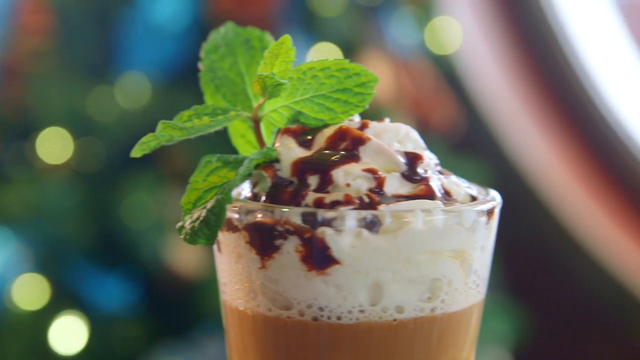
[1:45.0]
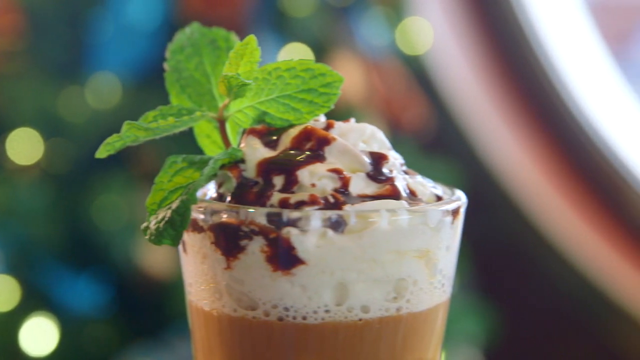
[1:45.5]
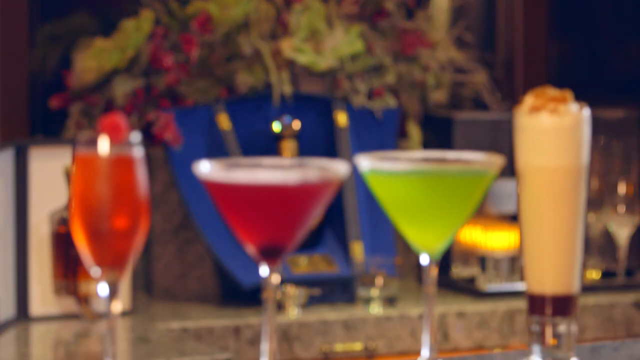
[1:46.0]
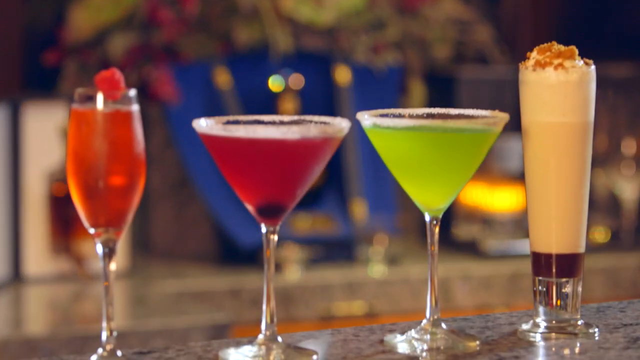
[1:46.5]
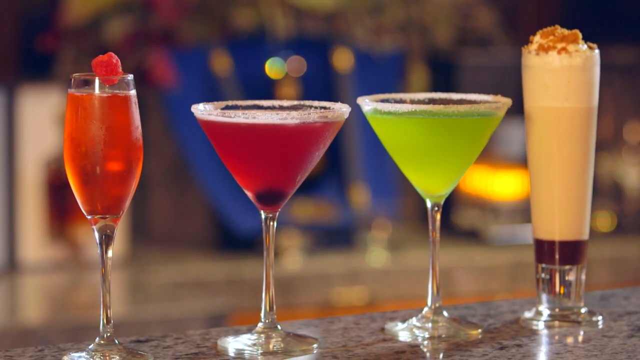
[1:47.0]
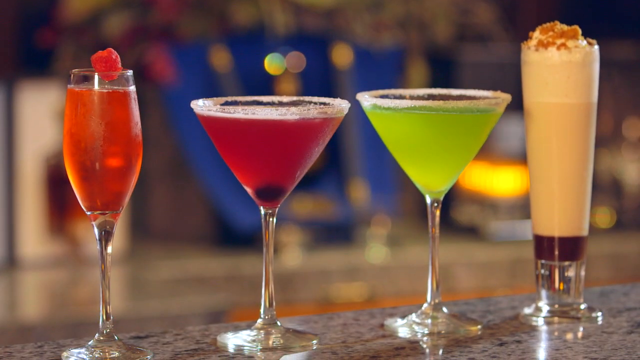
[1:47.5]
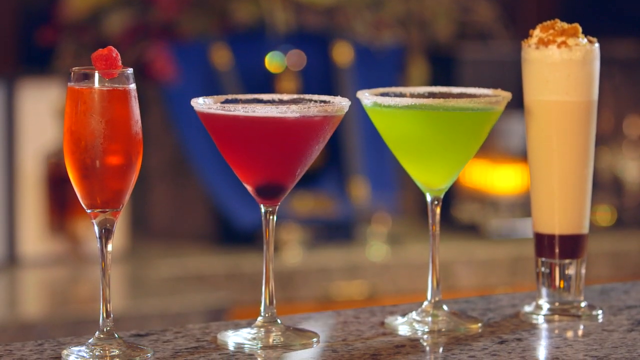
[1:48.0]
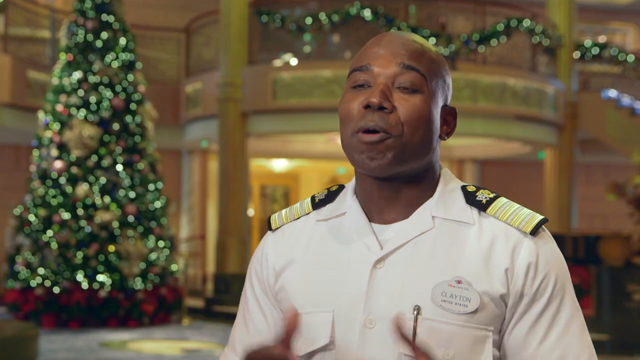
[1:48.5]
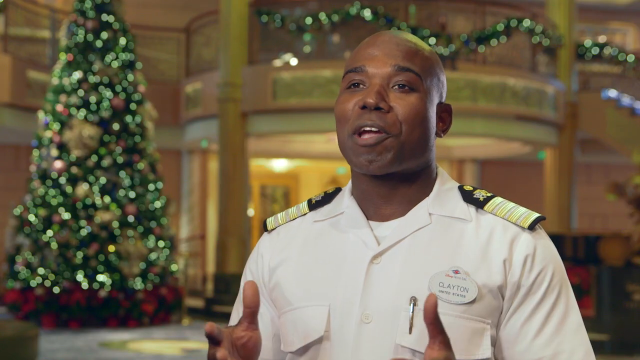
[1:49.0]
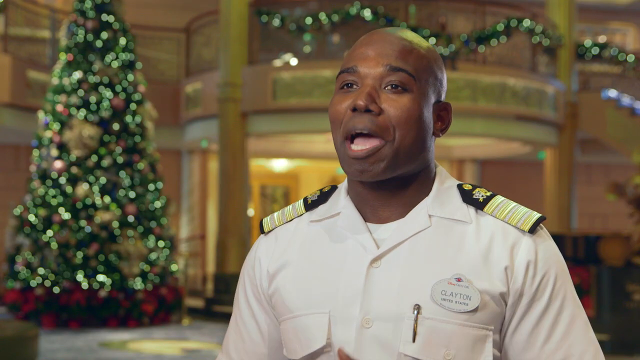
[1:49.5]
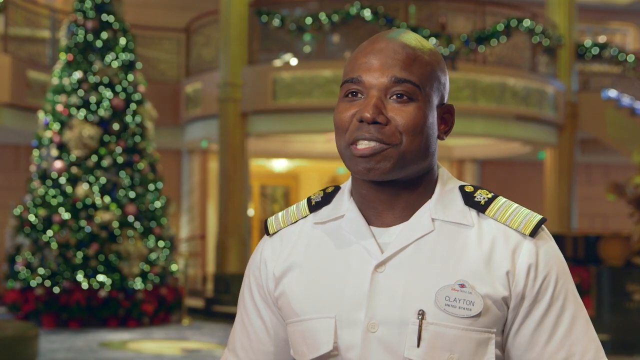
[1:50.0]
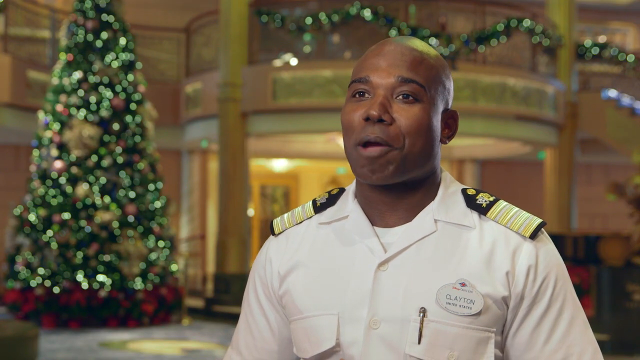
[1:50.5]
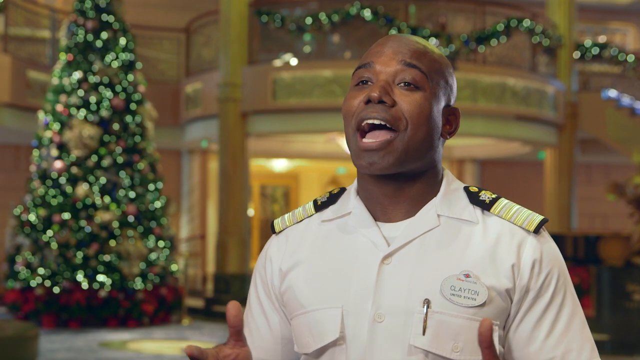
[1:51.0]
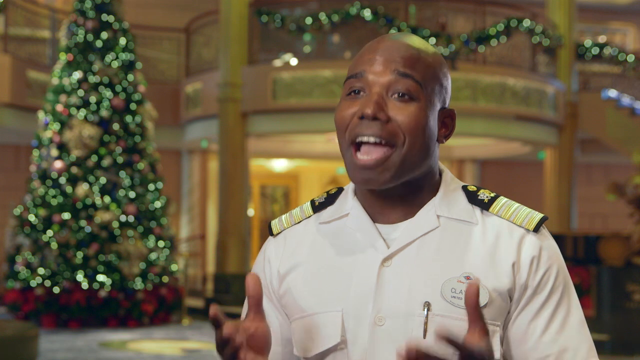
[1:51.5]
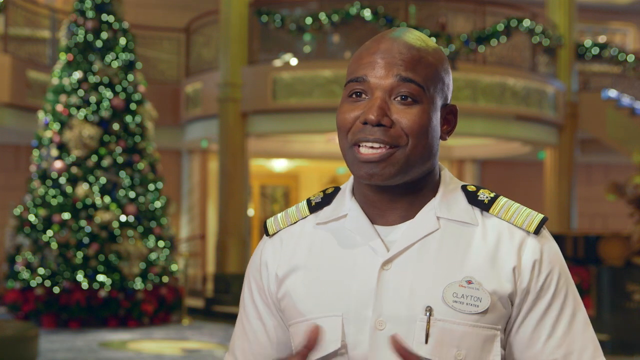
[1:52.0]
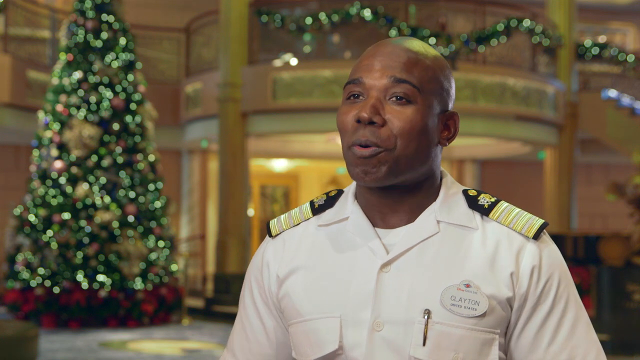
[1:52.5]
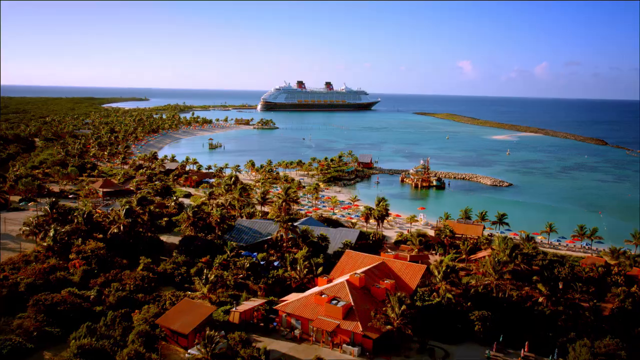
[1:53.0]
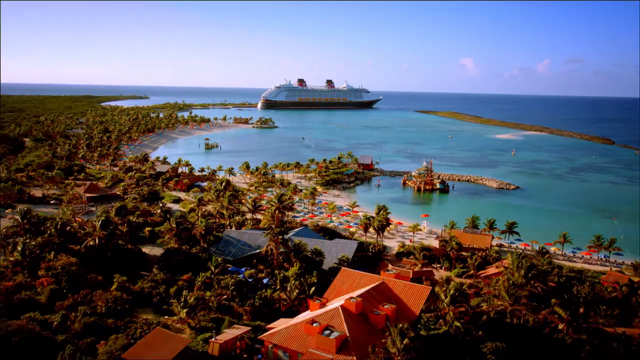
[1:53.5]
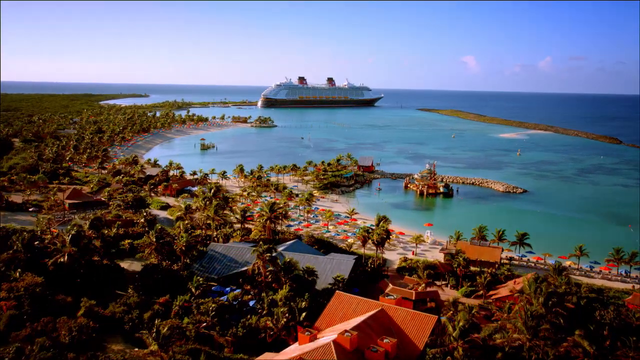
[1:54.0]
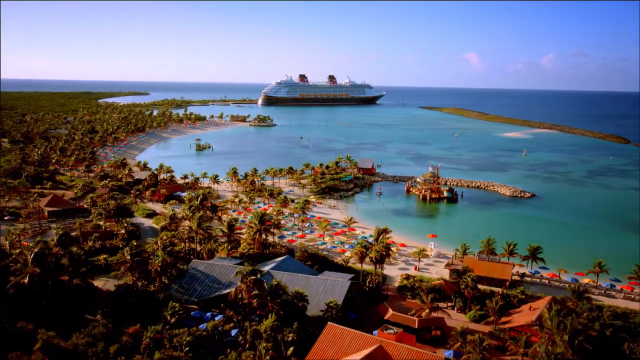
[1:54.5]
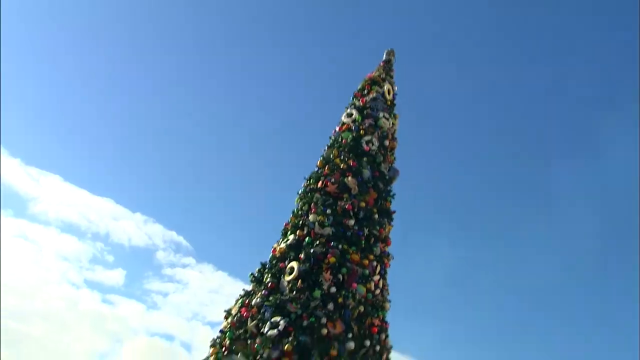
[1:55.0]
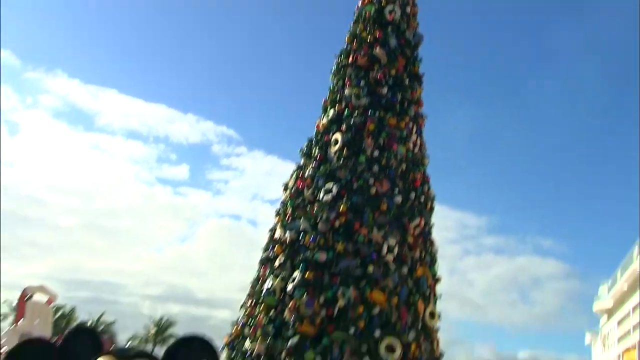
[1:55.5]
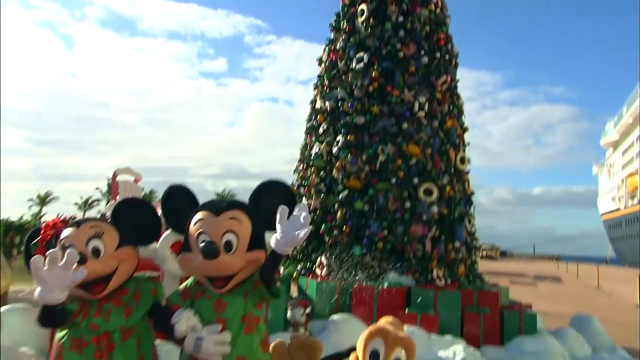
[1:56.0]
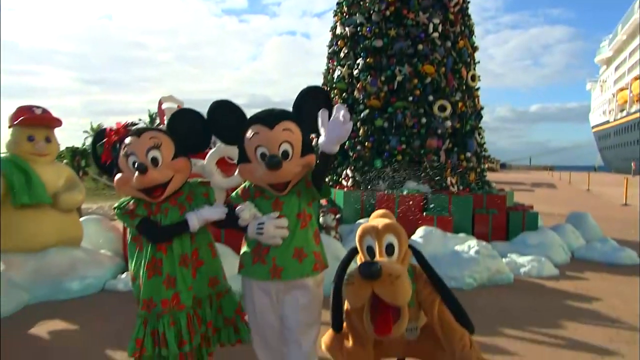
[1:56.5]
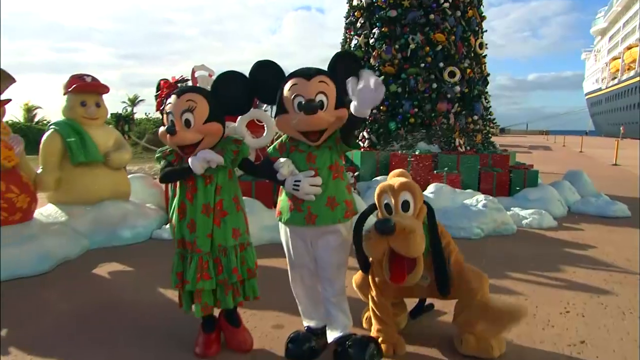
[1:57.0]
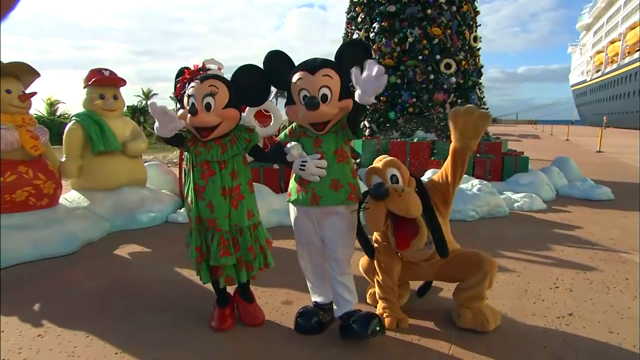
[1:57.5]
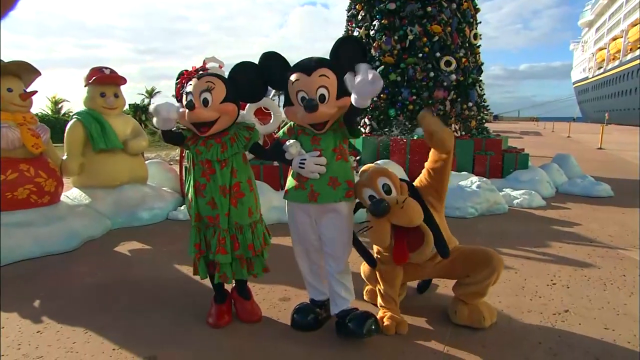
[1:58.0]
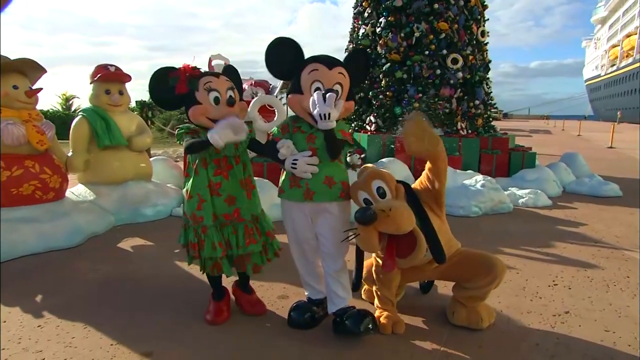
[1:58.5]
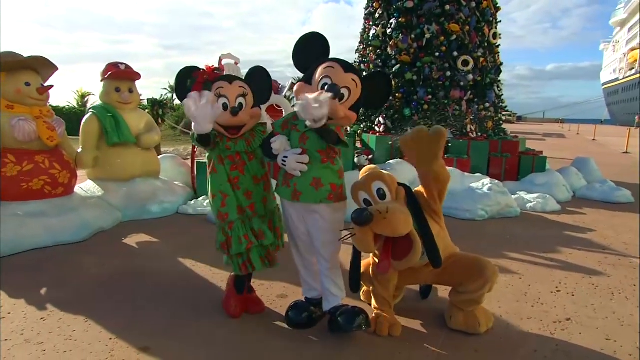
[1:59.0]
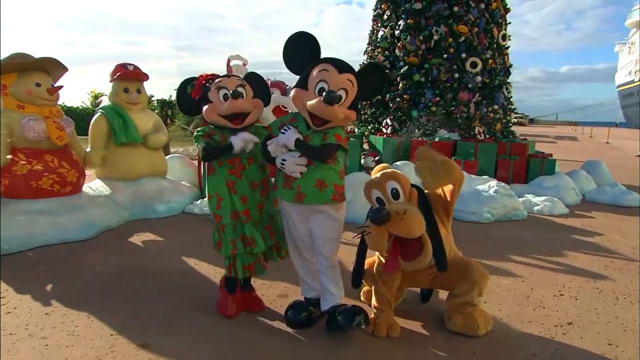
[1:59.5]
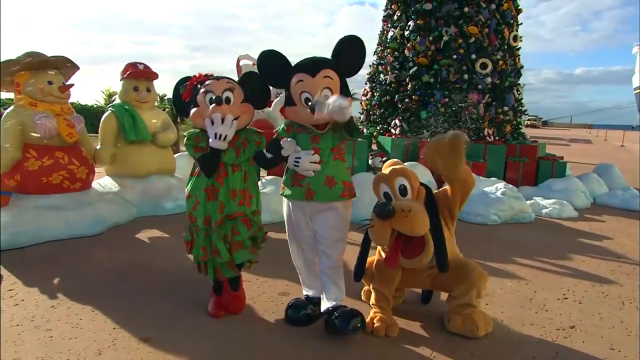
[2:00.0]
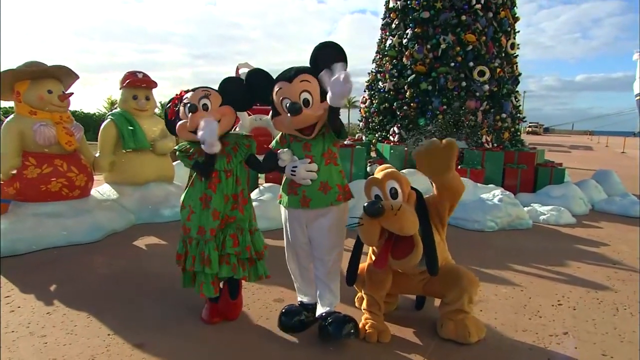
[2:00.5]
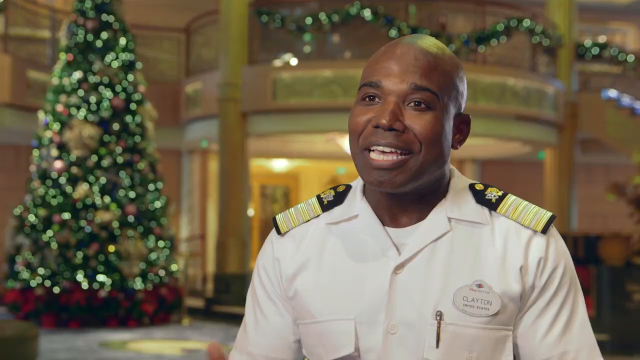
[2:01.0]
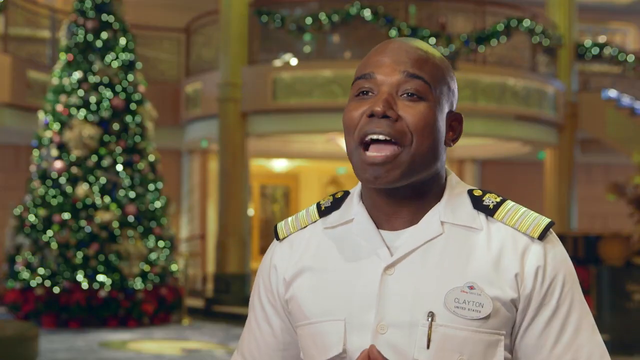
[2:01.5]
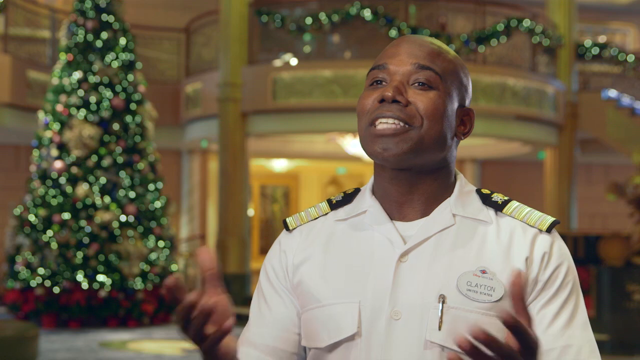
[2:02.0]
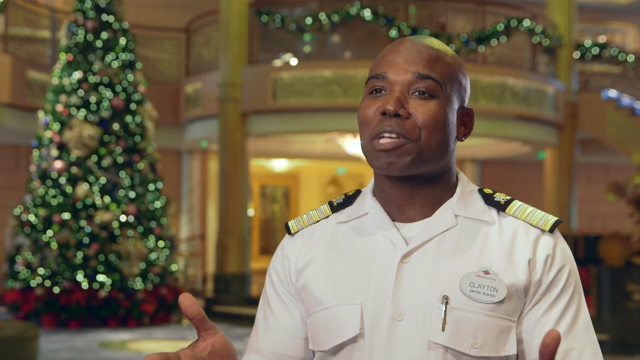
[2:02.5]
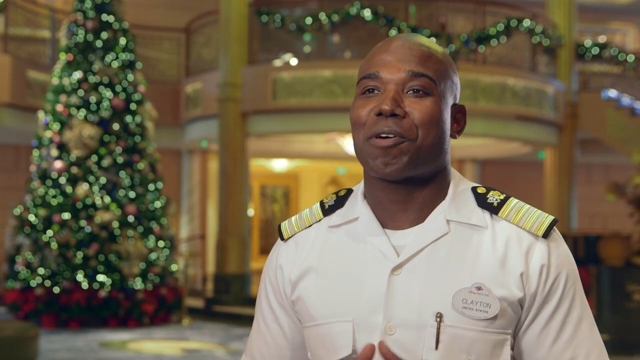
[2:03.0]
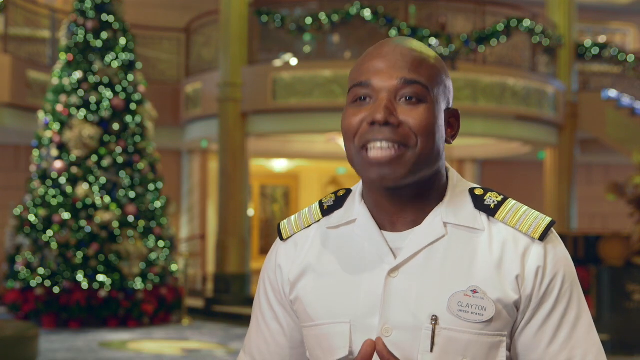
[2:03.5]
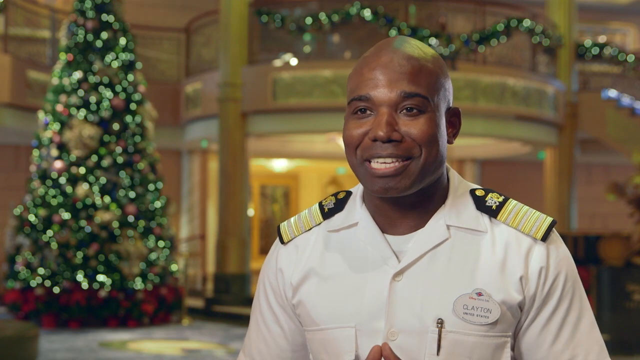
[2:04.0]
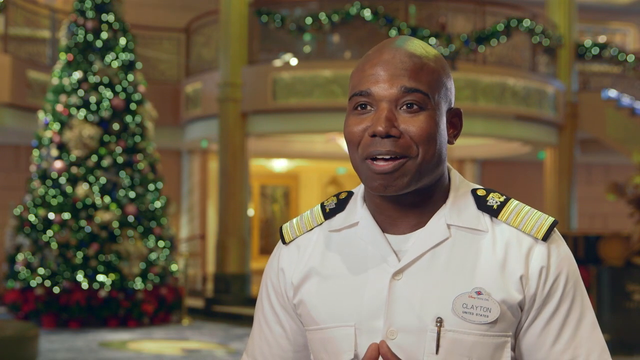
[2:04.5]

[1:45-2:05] Four beverages, apparently alcoholic, are shown: a cocktail with a raspberry on it; two martinis in the center, a red one with a berry at the bottom and a lime green one, both looking like they have sugar along the rim; and on the right a drink that looks like it could be a coffee liqueur beverage, seemingly topped with cookie crumble or brown sugar and some foam. Clayton, the cruise director, speaks to the camera with the atrium and the sparkly Christmas tree in the background. A view of the ship from outside, which looks like it was taken by a drone, overlooks a blue-turquoise bay with a beach and lots of palm trees. An outside side shot, apparently in port, shows Mickey, Minnie and Pluto in front of a really big Christmas tree, apparently in the Caribbean, with fake snow mounds that look like hard plaster and some little sand snowman pictures. The cruise director is then seen speaking to the camera again.